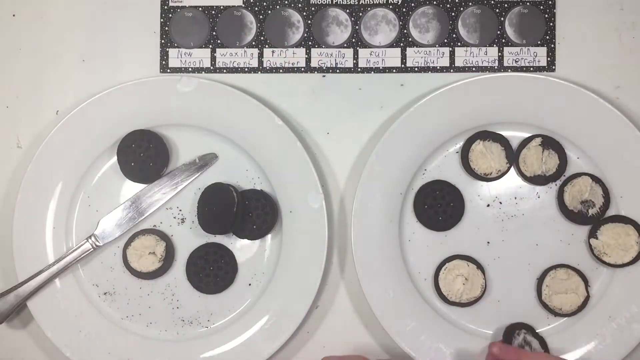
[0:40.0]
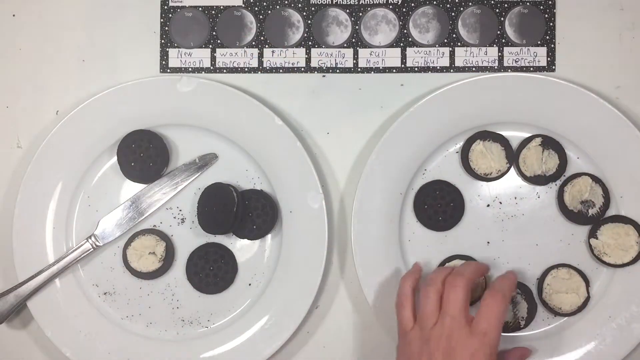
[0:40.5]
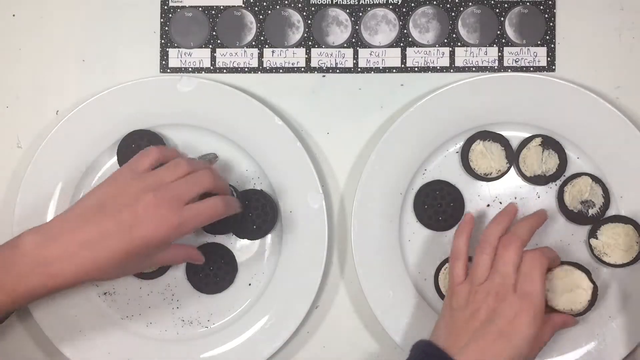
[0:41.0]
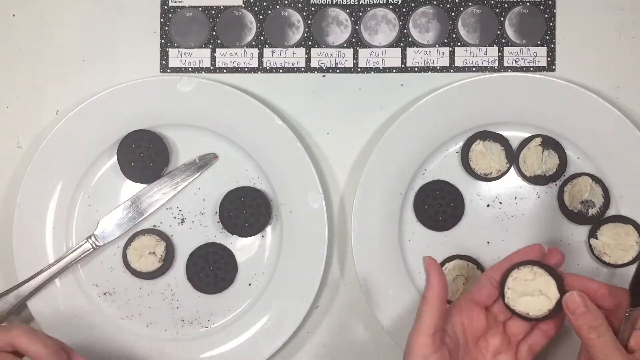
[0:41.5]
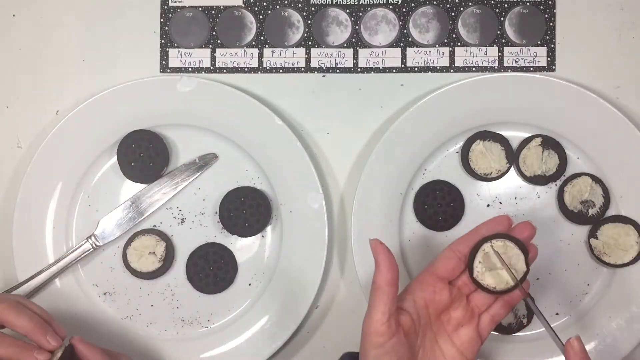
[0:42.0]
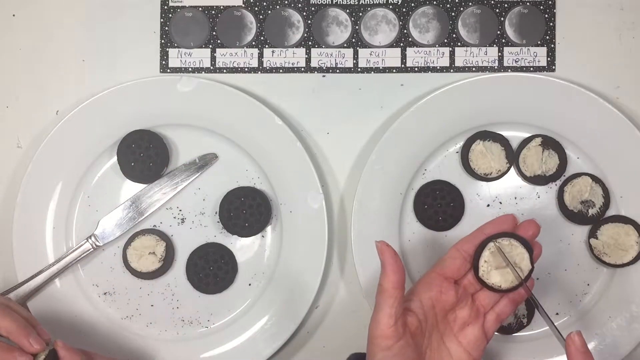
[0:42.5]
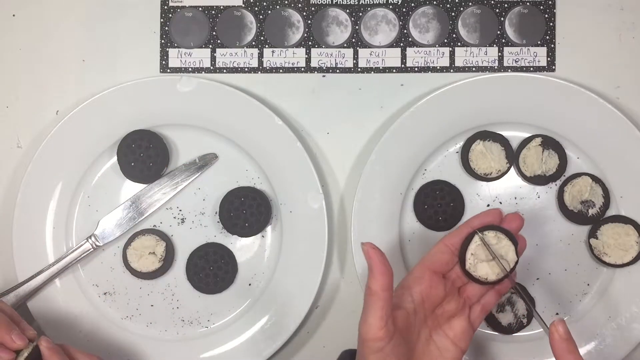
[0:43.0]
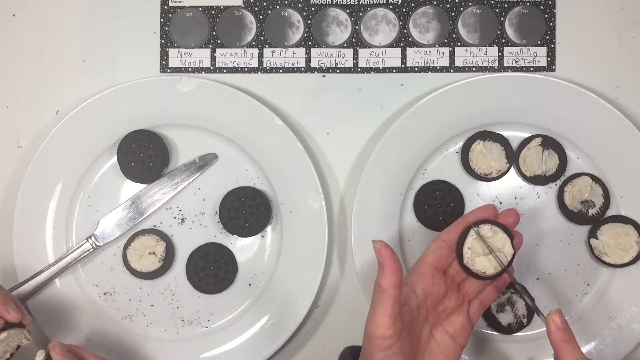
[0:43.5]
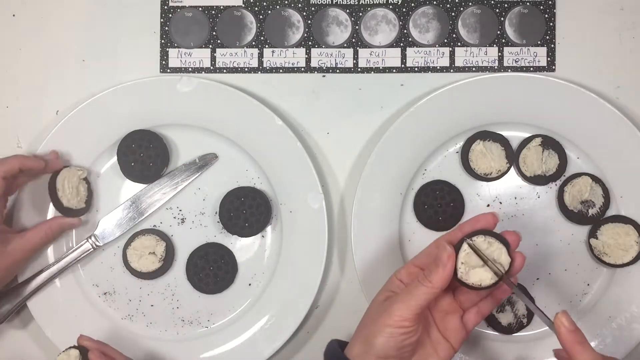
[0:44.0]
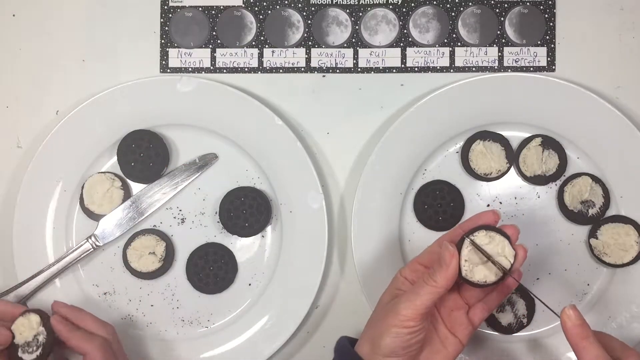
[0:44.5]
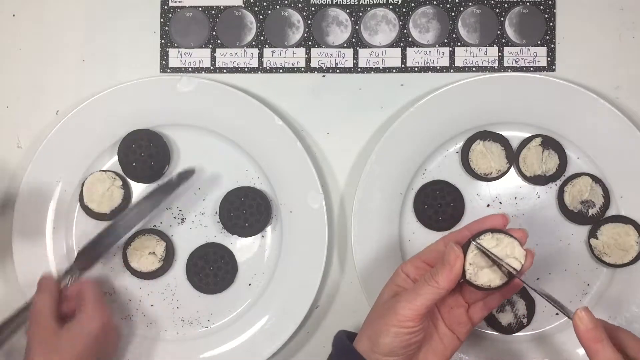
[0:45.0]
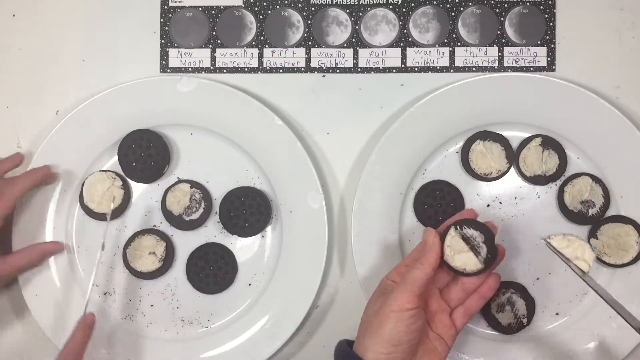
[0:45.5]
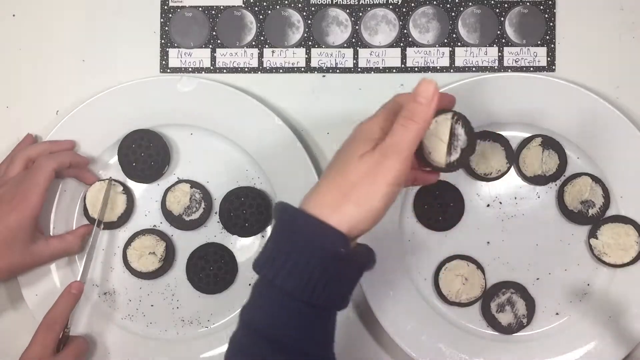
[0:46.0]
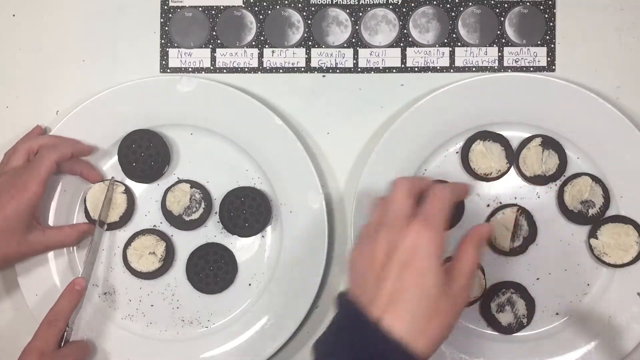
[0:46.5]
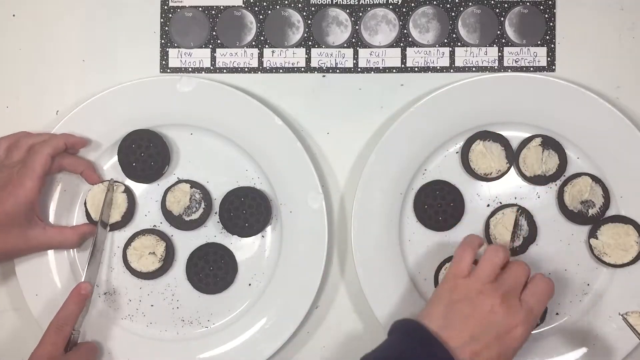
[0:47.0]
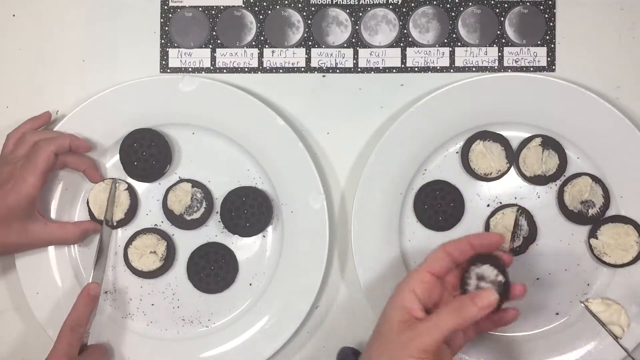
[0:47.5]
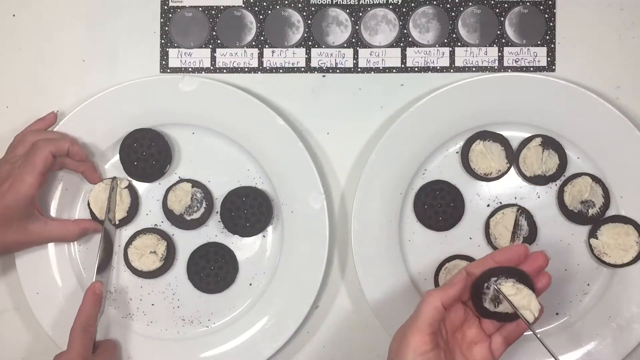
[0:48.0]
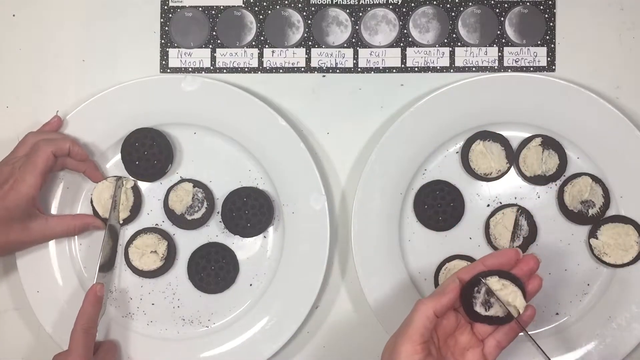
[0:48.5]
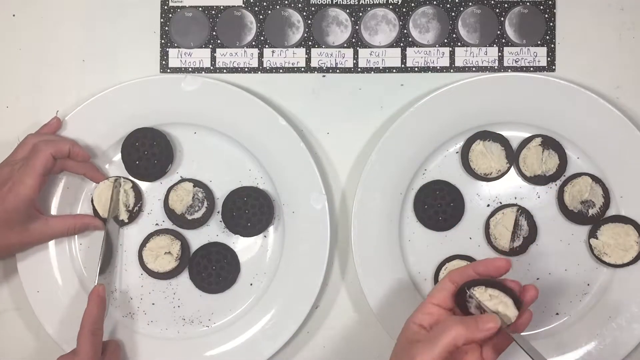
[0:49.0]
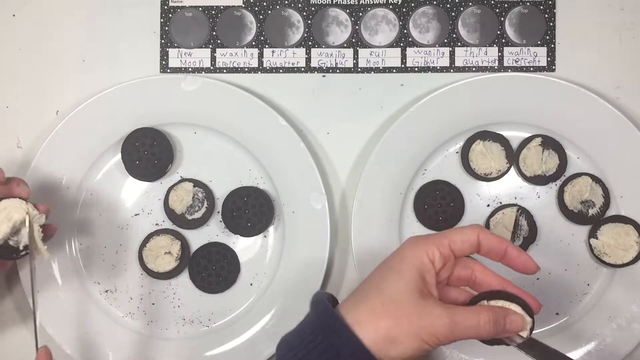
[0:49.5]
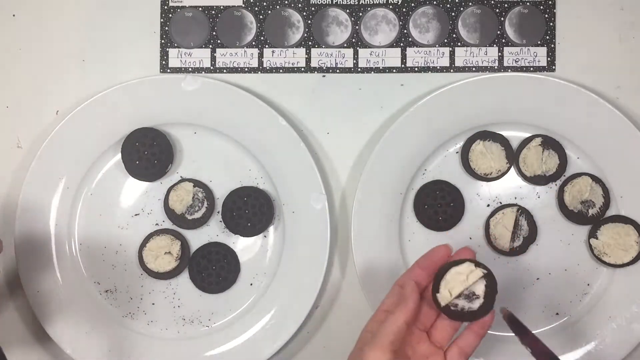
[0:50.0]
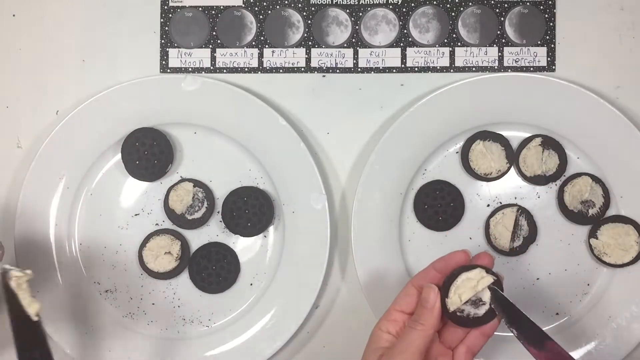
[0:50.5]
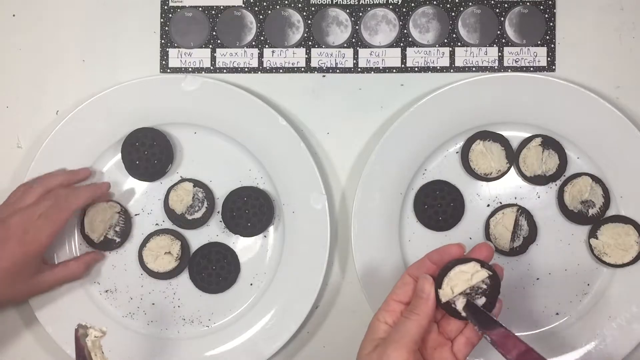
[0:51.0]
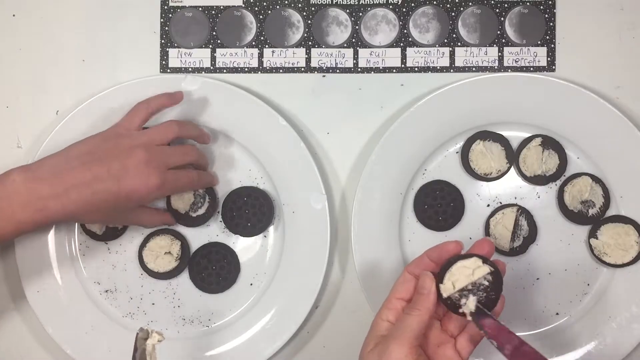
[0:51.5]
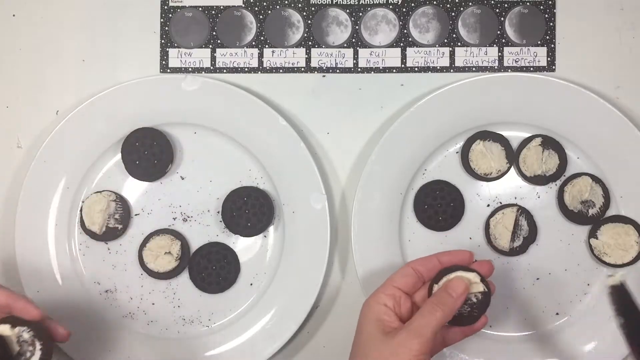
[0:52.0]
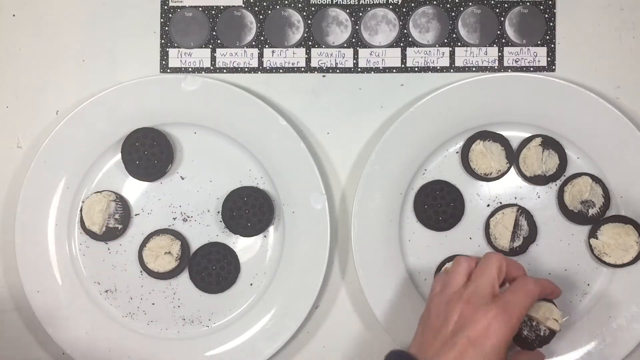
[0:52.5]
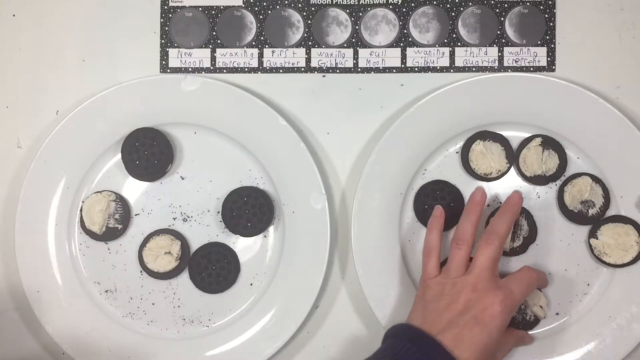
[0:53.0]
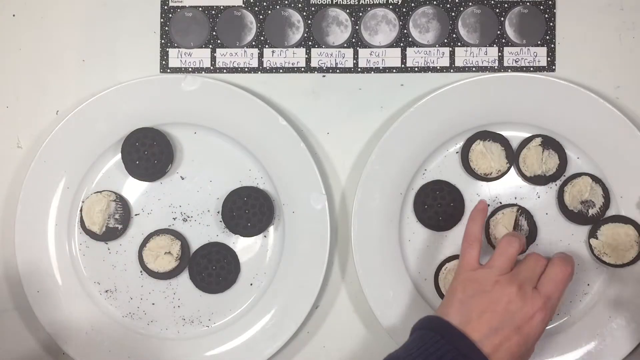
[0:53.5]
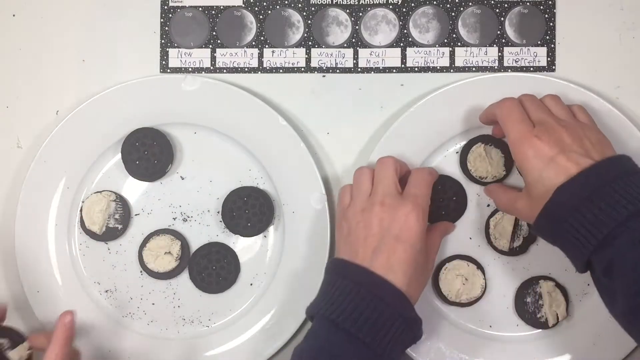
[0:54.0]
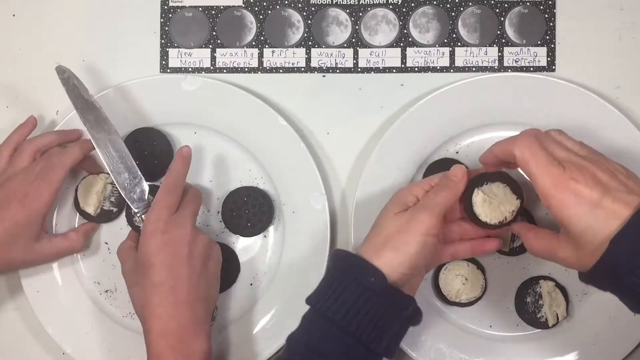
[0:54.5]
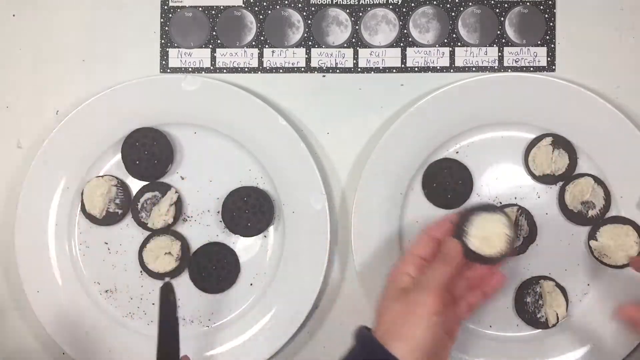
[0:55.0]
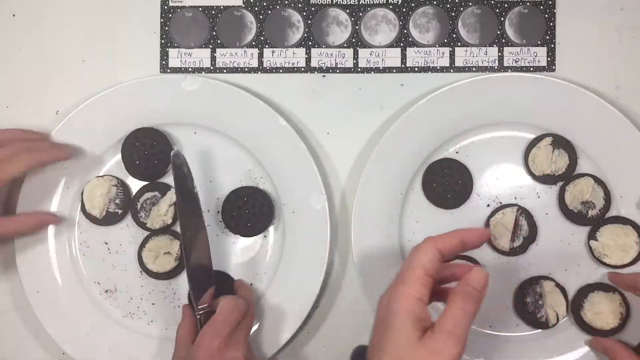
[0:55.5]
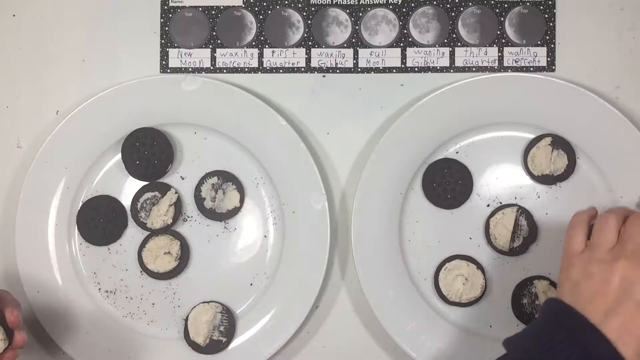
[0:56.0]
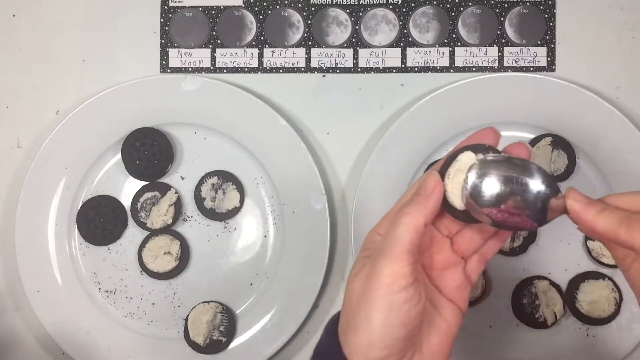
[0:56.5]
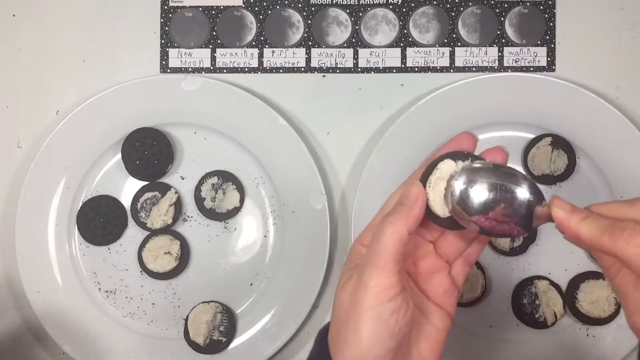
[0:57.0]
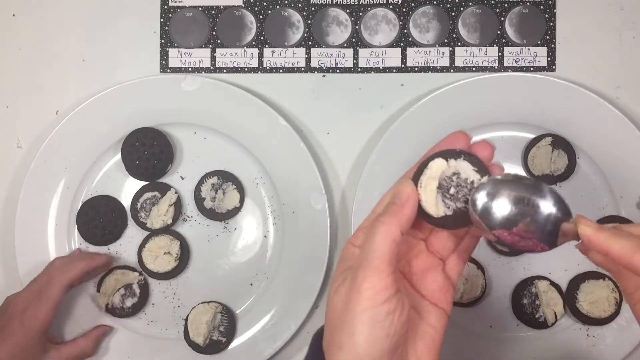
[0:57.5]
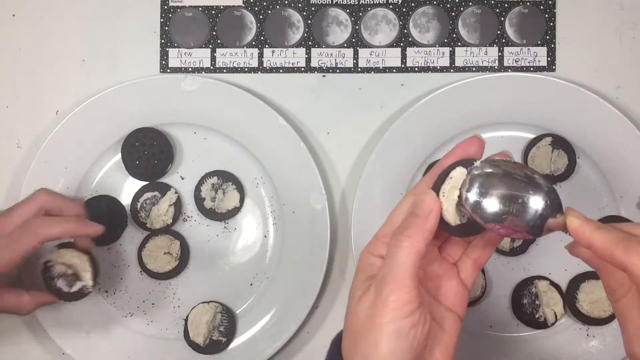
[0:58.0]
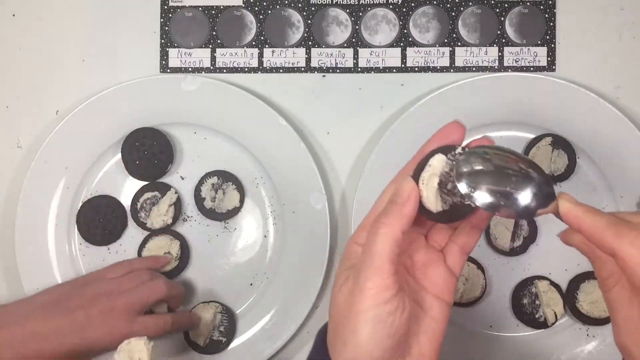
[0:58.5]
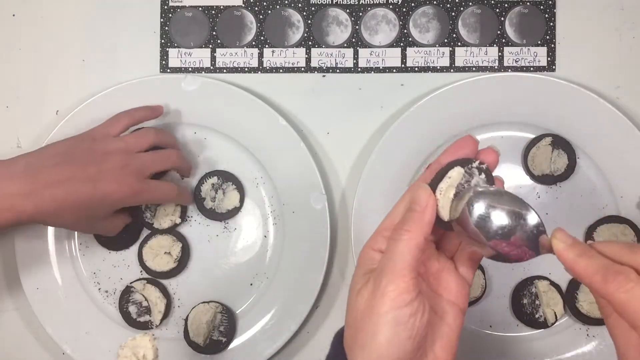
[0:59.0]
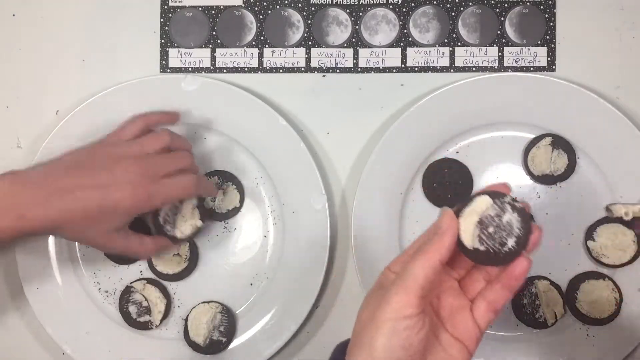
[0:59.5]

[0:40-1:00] The halved cookies are displayed on the two plates. All the cookies on the right appear to be open, while on the left the person seems to still be opening their section of cookies. A silver butter knife lies on top of the plate. The person on the left keeps opening cookies, while the person on the right uses a knife to make different patterns in the filling or frosting, scraping some off entirely and scraping others half off in a neat line. They appear to be shaping the remaining frosting on the cookie halves to match the different phases of the moon, scraping off some frosting and leaving other bits on to form the shape of each phase.